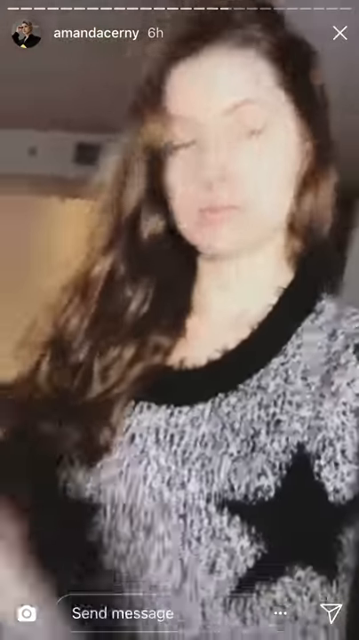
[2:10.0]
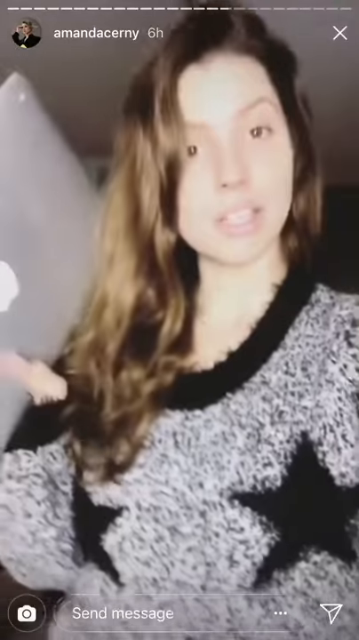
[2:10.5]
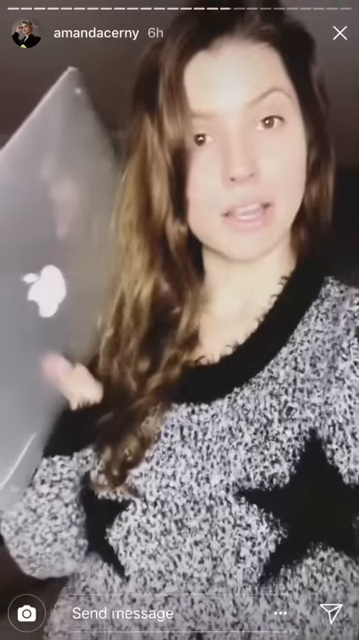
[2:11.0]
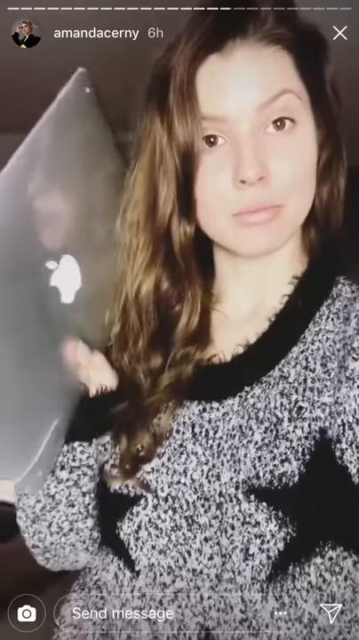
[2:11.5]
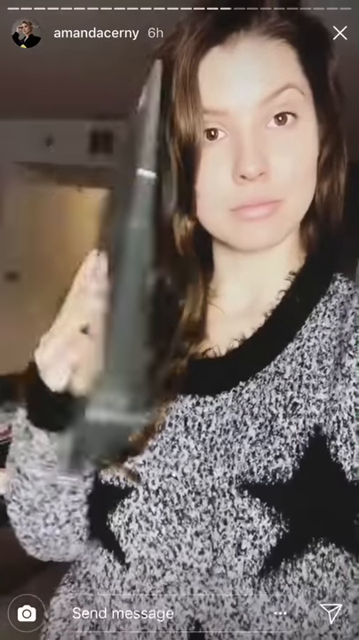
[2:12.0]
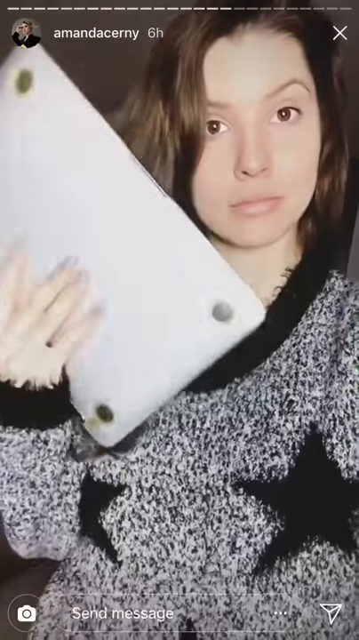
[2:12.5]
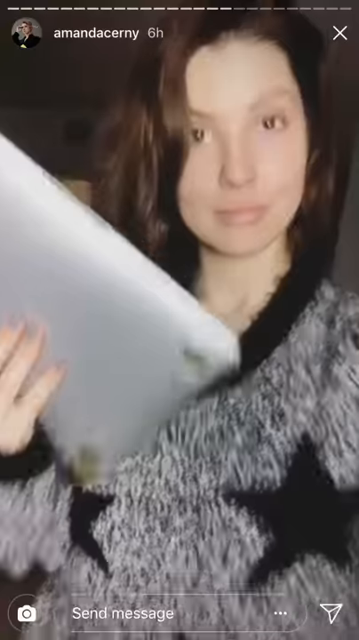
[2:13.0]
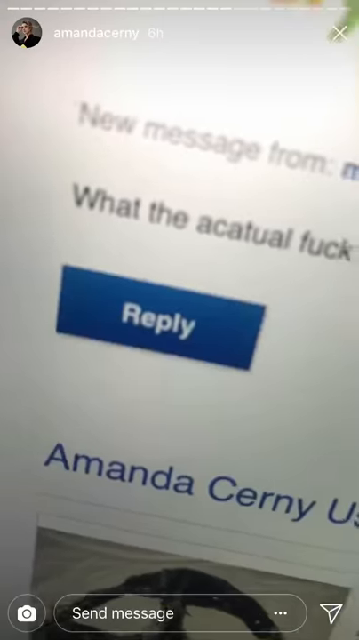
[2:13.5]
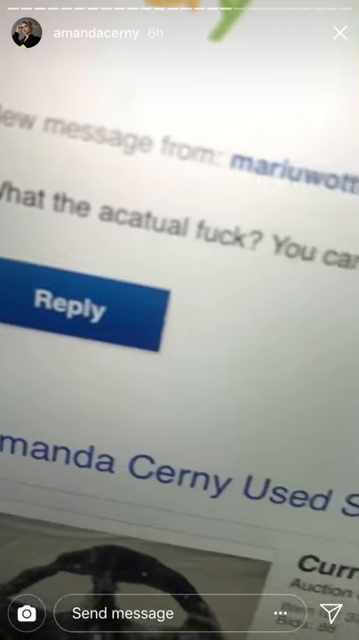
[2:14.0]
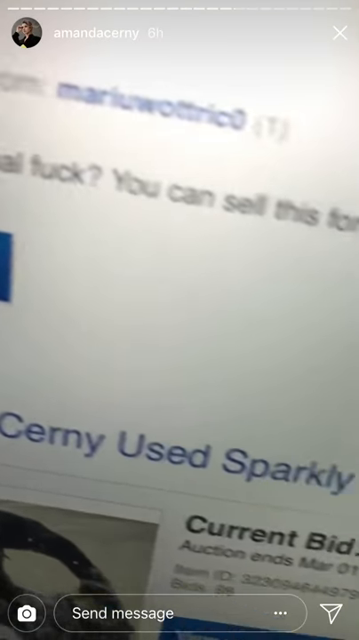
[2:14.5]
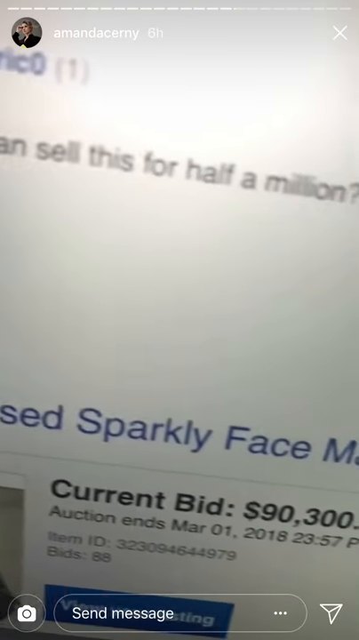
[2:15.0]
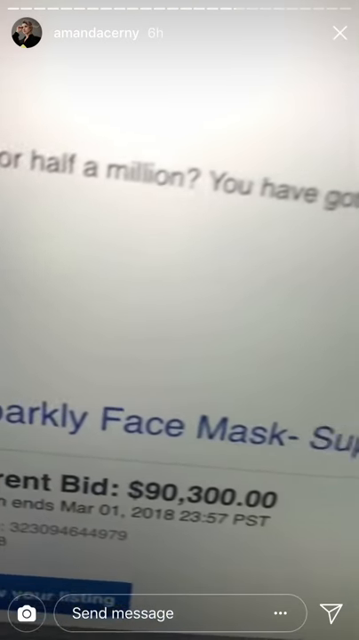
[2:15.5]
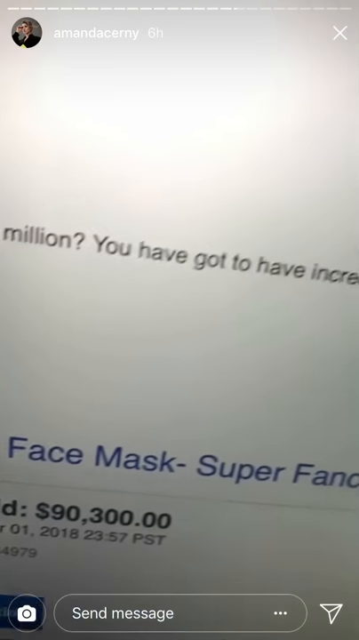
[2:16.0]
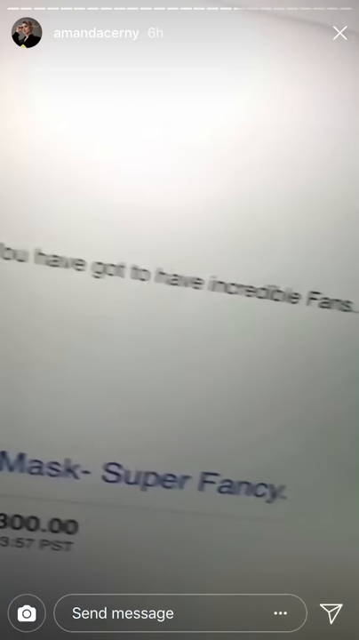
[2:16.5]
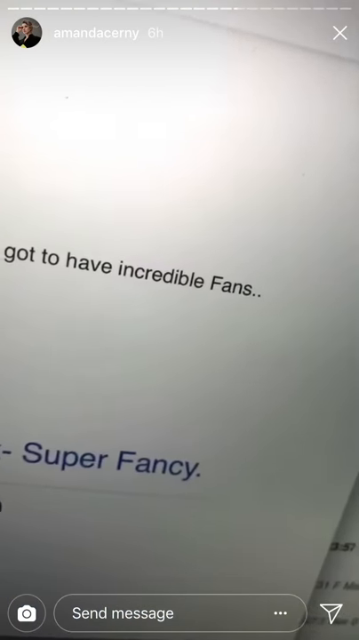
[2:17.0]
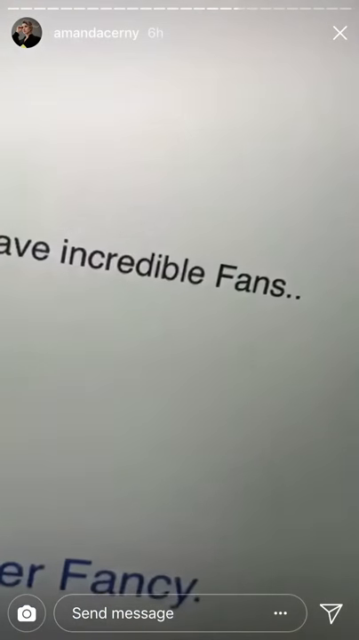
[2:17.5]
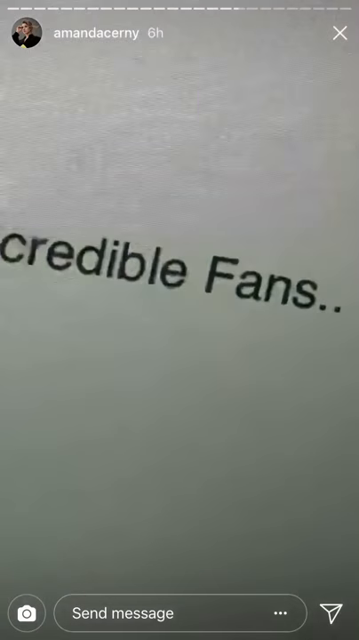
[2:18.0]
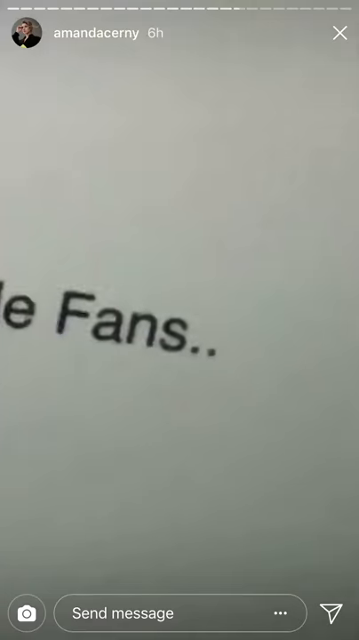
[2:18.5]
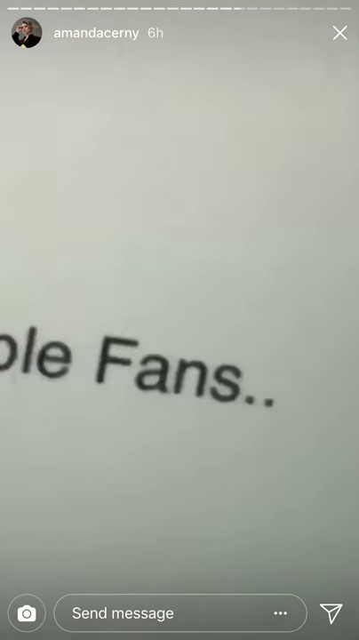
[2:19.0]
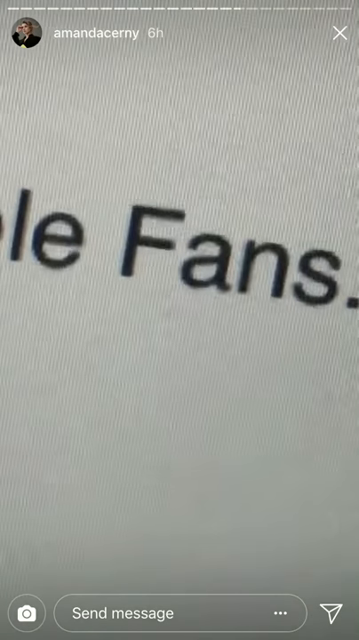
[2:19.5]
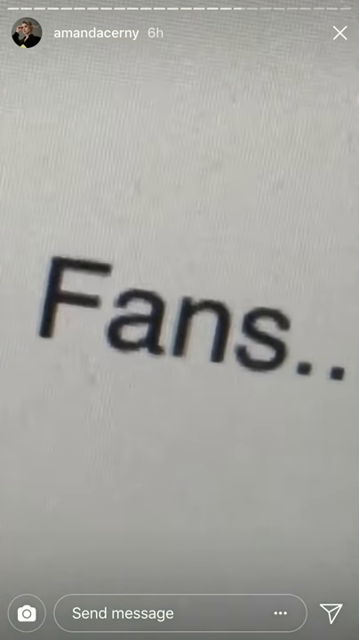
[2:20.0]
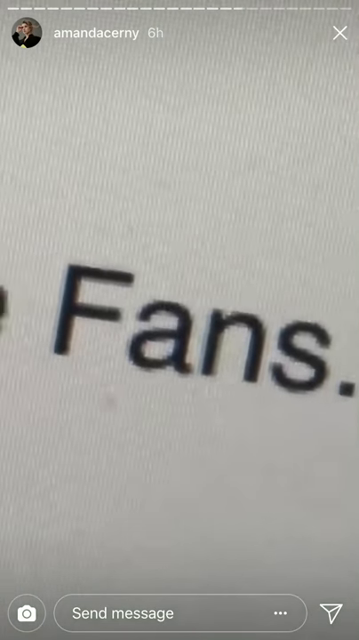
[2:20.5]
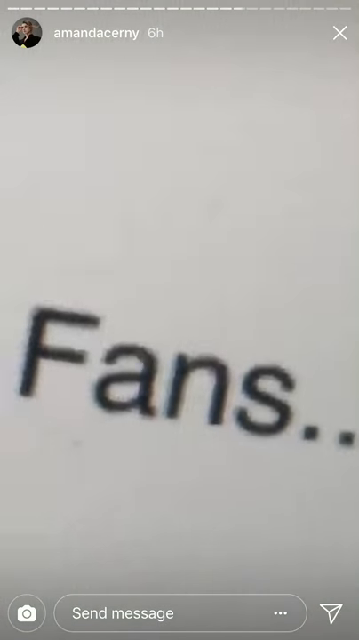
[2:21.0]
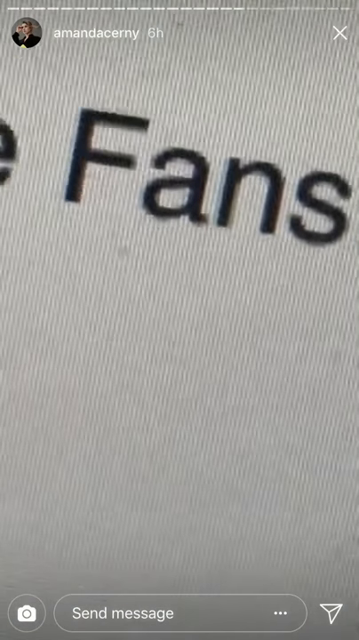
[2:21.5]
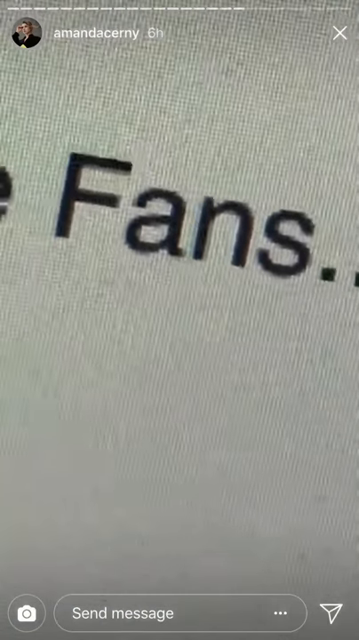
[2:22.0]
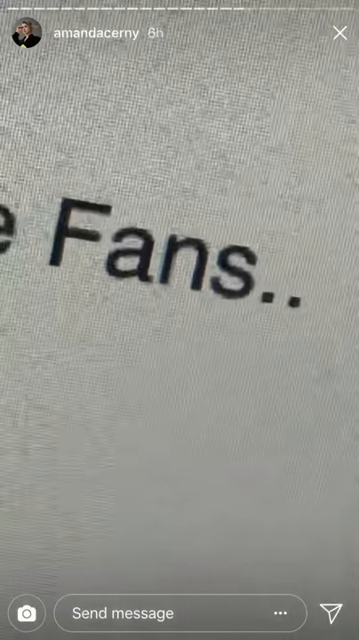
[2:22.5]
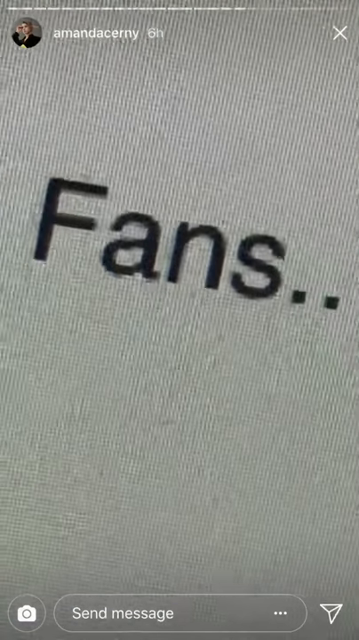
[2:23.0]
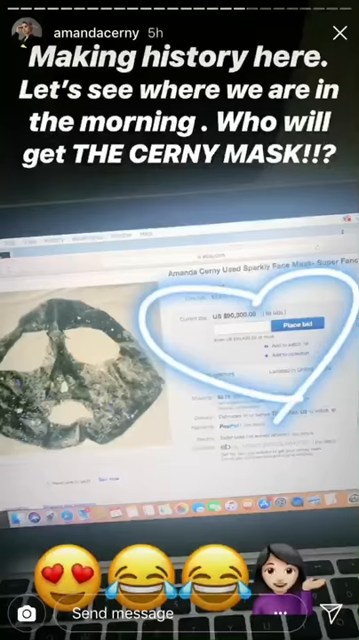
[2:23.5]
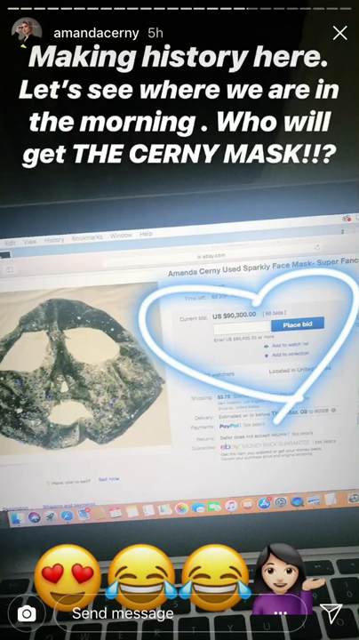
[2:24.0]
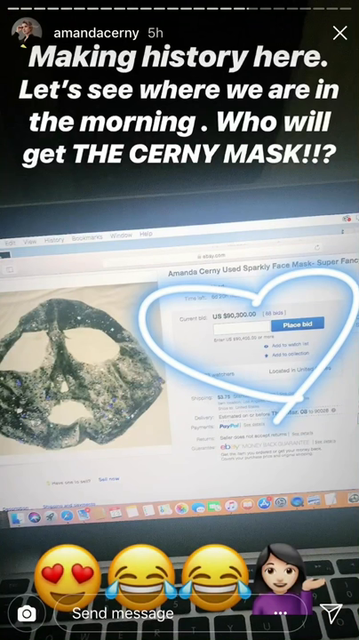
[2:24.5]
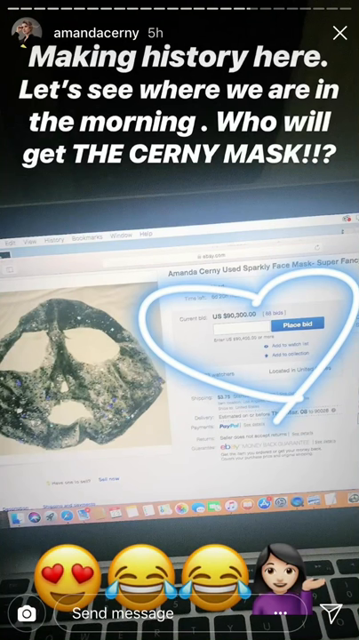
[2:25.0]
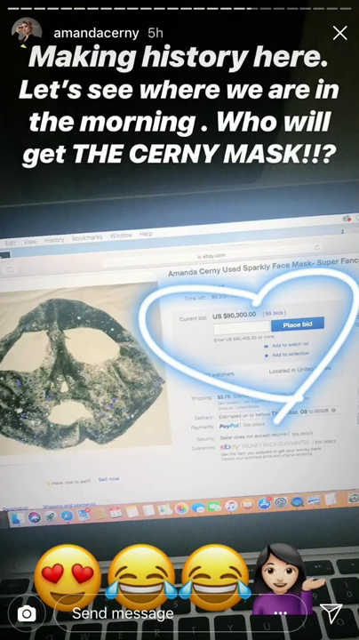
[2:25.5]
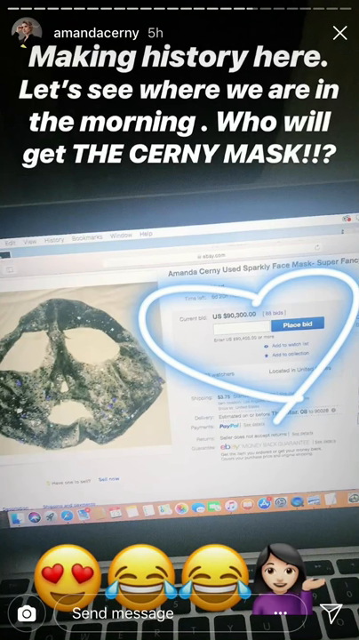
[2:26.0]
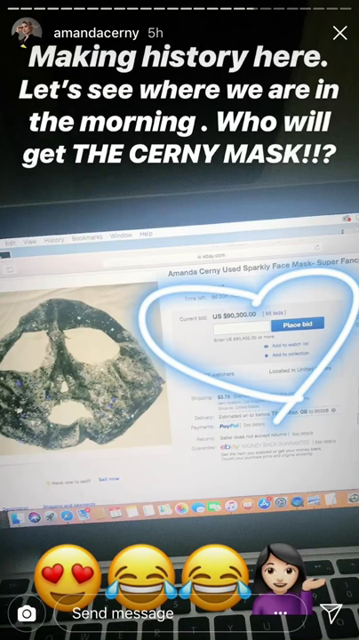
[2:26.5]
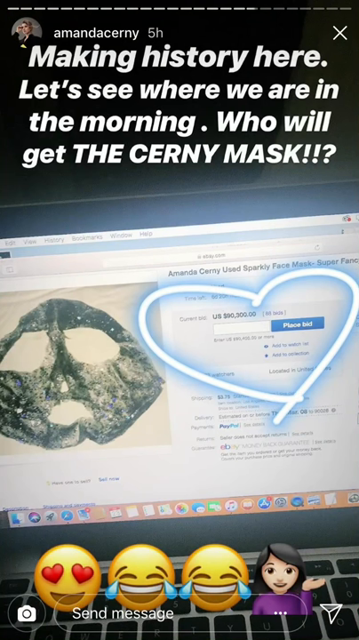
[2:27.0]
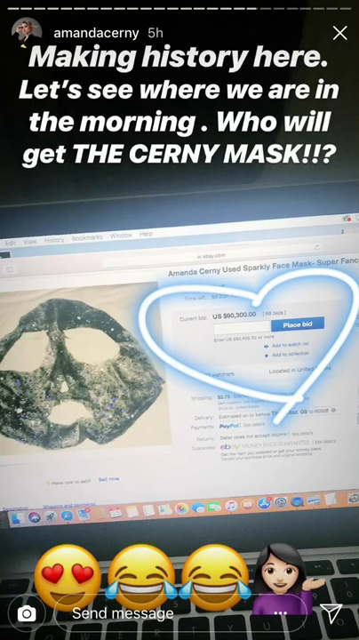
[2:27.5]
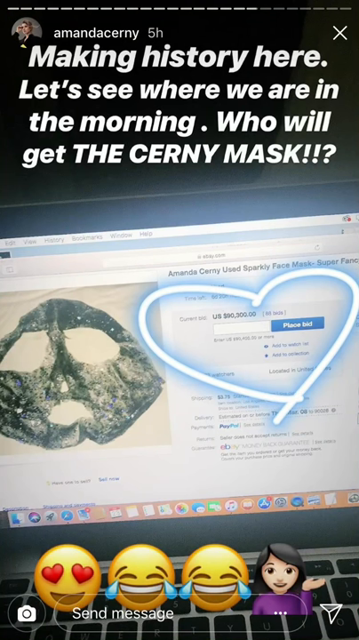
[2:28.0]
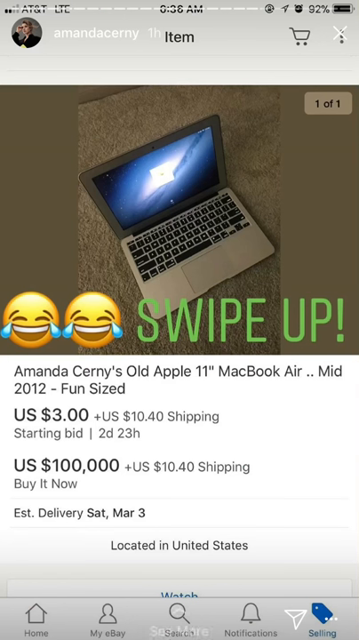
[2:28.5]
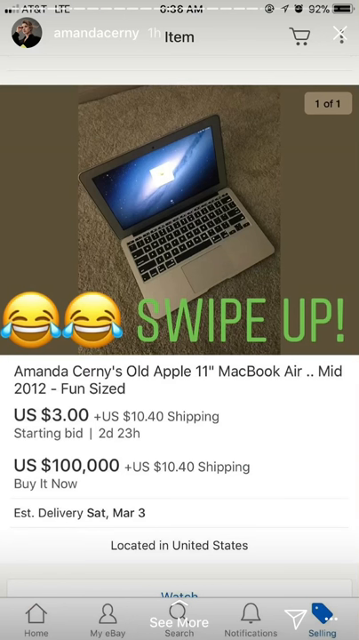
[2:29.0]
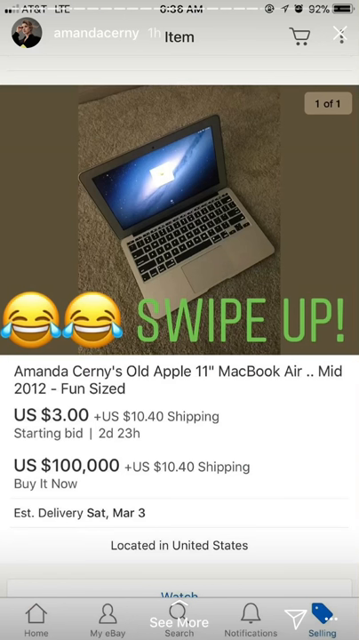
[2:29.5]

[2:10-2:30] A lady with long brown hair, wearing a black and grey cardigan, holds an Apple iPad in her hands; she is taking or showing a video on the Instagram stories of the user Amanda Cerny. As she speaks, she flips the tablet to show a message on its screen reading "you have incredible fans", and the video zooms in on "fans". The video then displays "making history here. Let's see where we are in the morning. We will get the Cerny mask" along with a picture of the mask on the bed and an eBay screenshot showing the highest bid as $90,100, with a heart drawn around it in blue. The video then shows a MacBook with the text "swipe up Amanda Cerny's old MacBook Air" and some laughing emojis at the bottom.